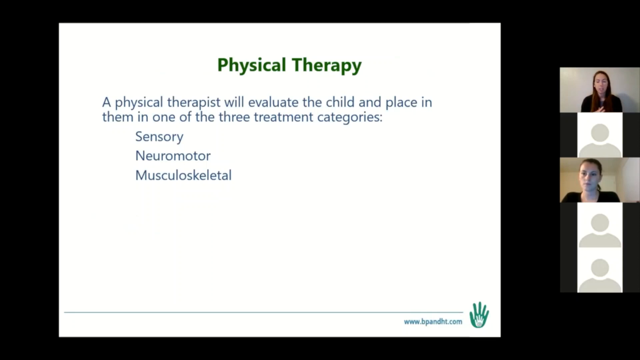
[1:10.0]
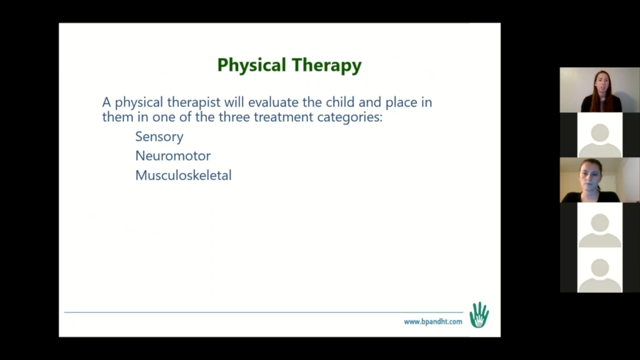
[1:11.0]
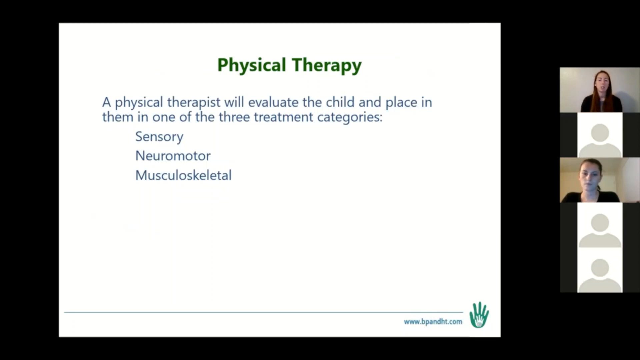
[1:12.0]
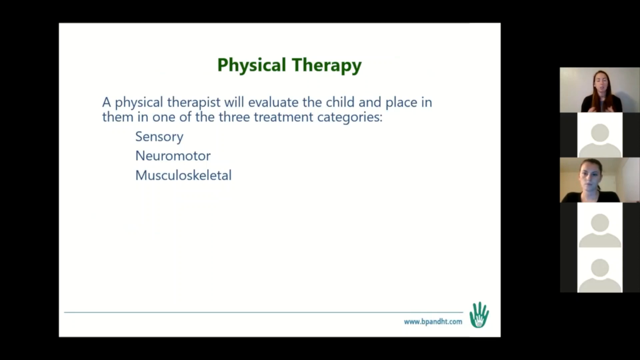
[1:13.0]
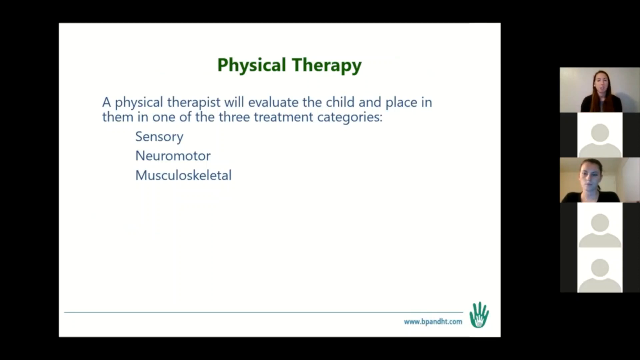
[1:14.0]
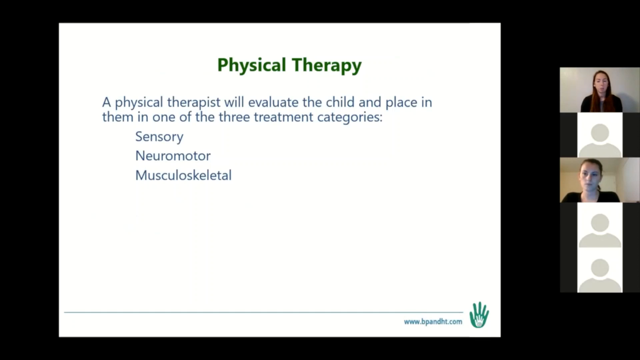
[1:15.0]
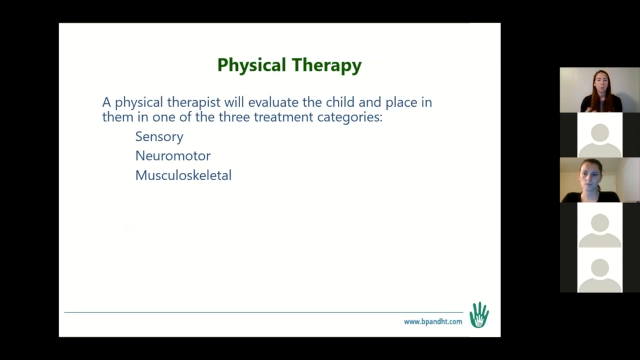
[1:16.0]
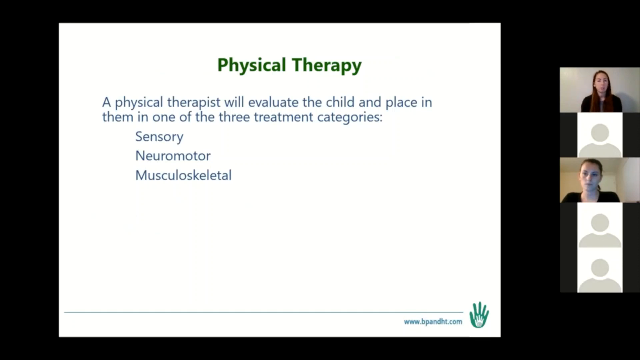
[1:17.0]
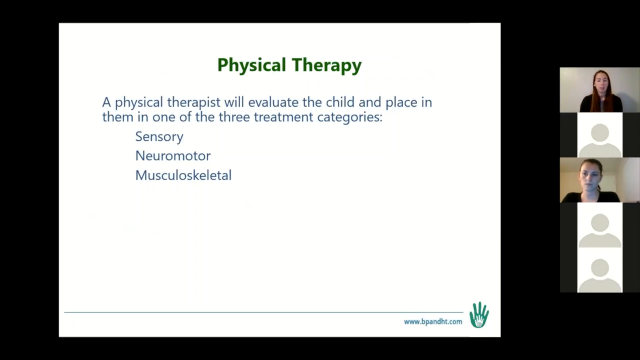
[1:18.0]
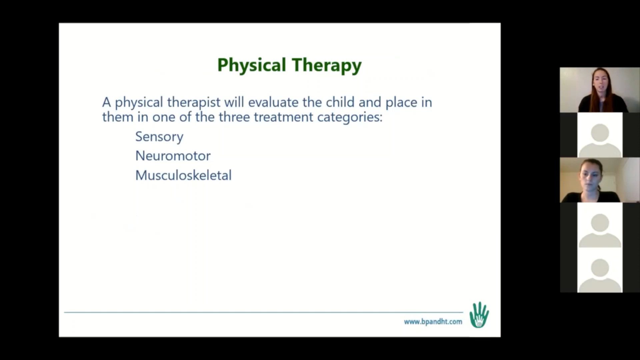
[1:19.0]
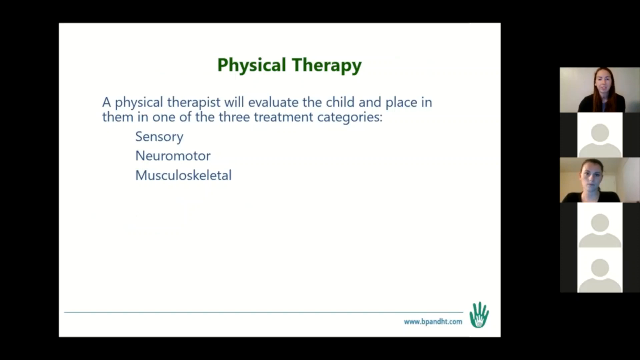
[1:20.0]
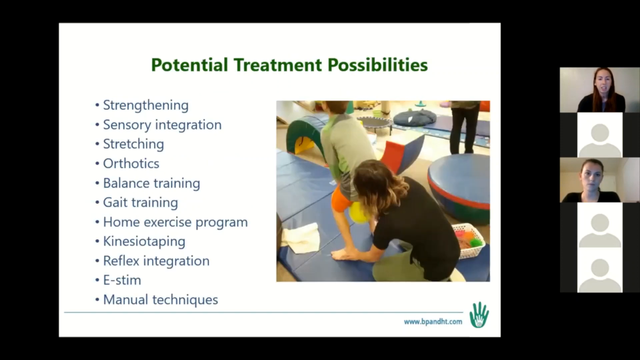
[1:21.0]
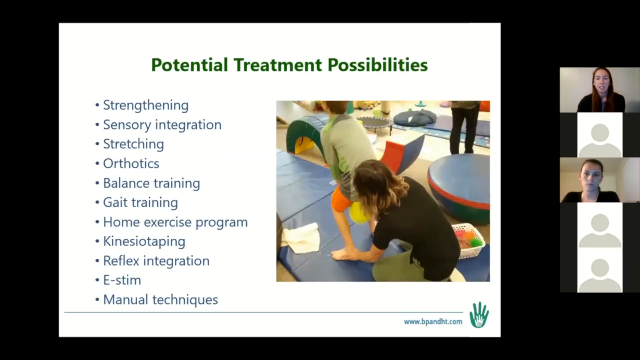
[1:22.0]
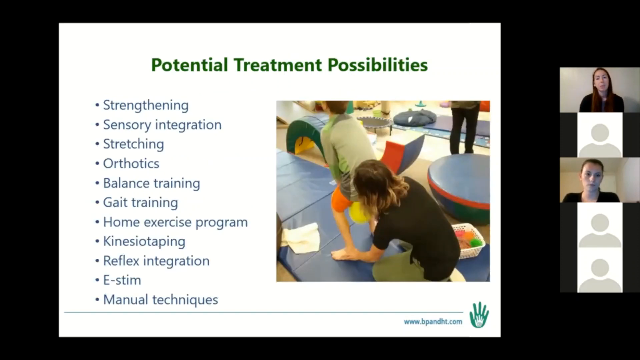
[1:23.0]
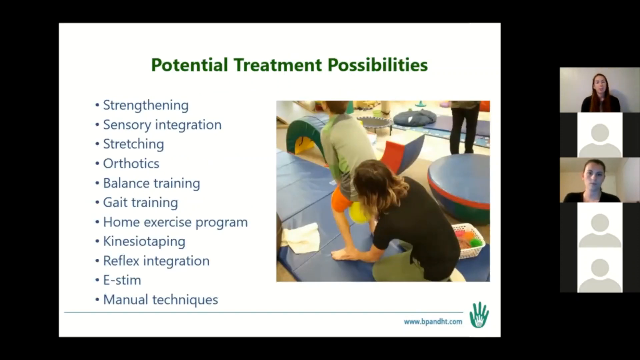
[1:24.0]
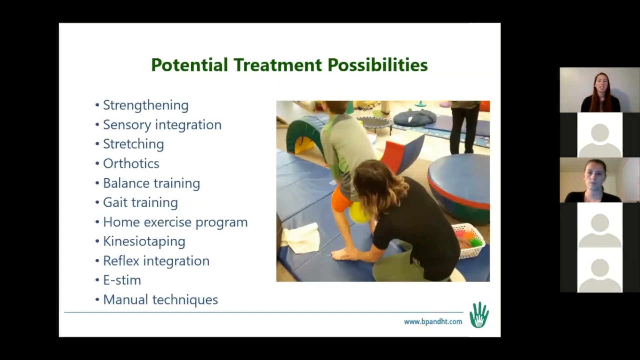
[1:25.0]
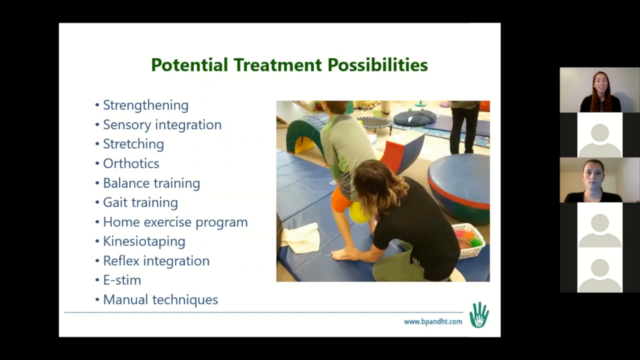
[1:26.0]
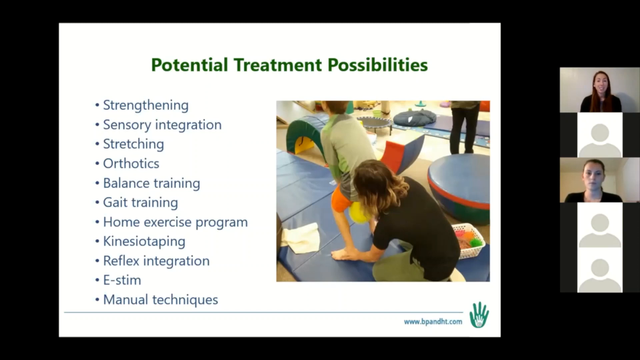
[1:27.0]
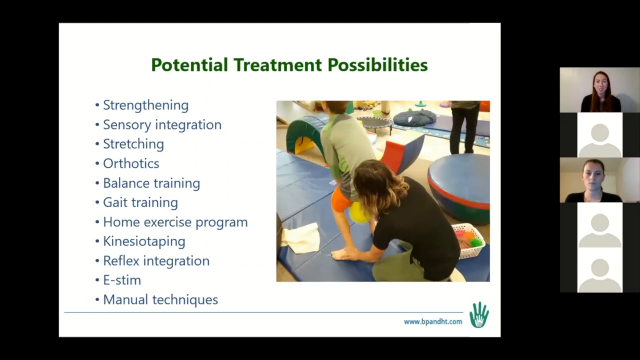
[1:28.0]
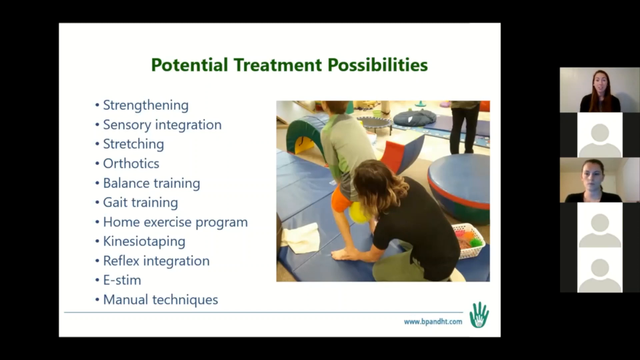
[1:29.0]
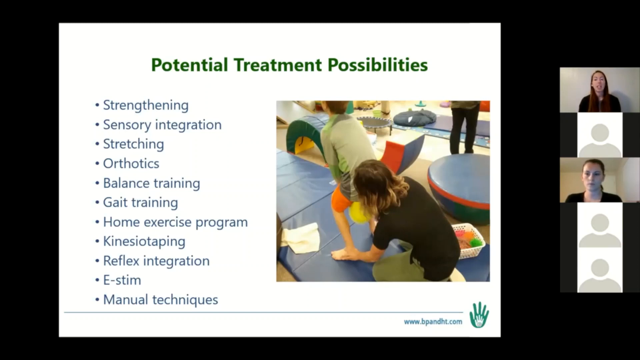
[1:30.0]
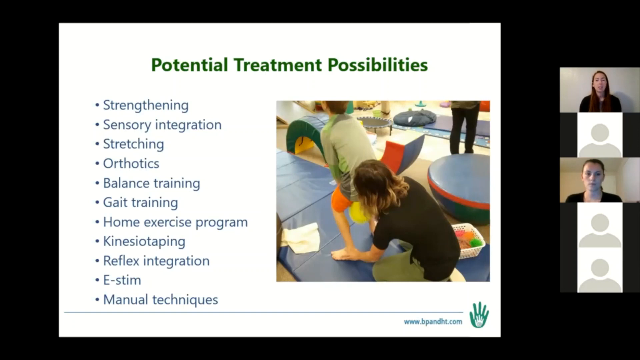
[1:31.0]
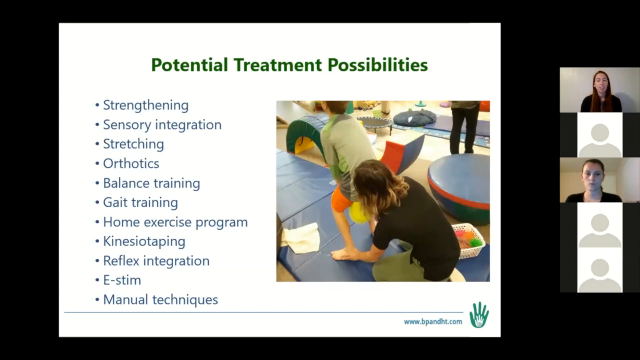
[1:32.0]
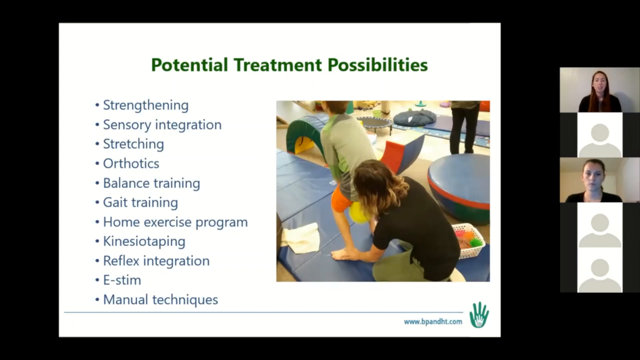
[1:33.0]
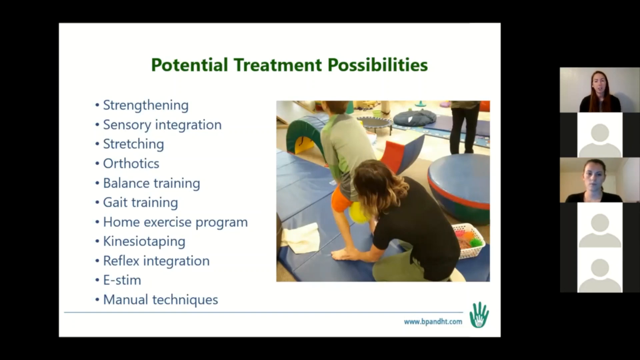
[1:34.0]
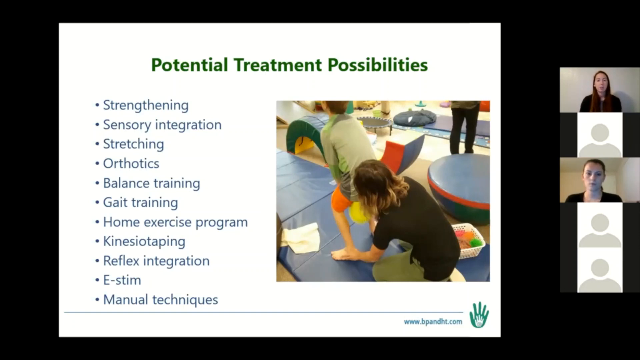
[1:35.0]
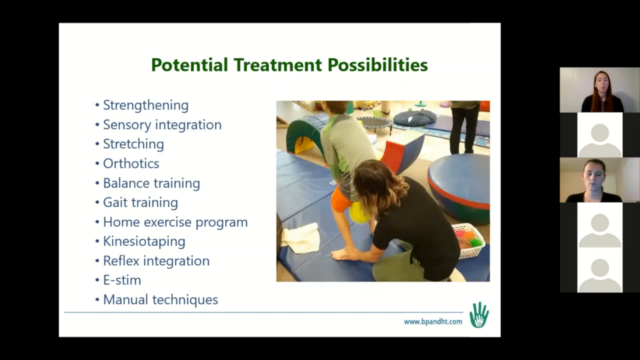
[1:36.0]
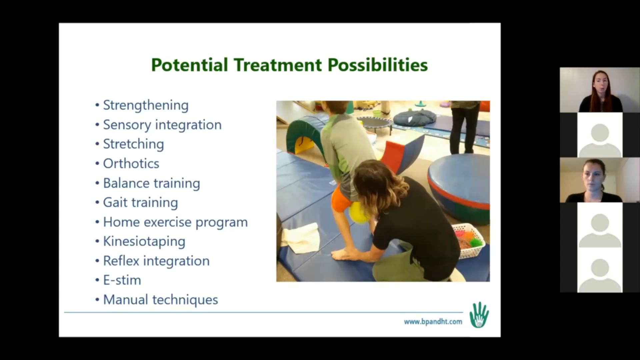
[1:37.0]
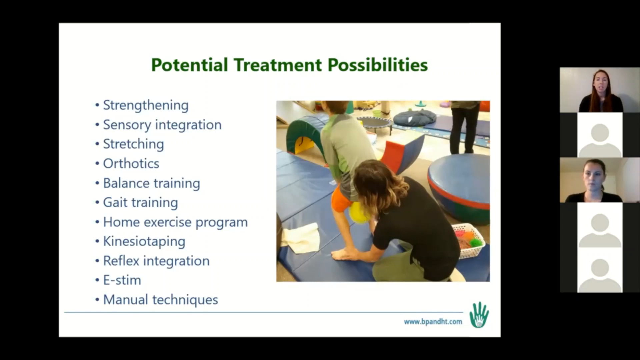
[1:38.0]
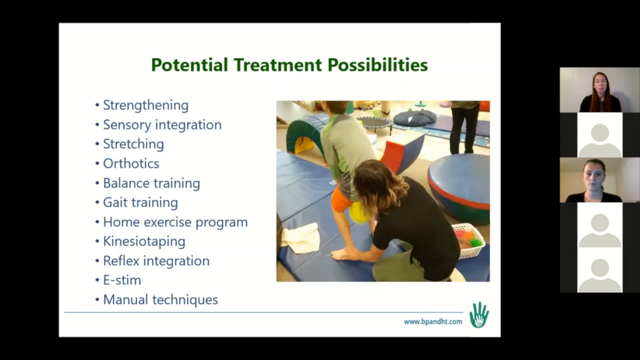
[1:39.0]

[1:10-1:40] A live video conference screen shows icons of five participants arranged vertically on the right side. The first and third participants display their faces live in a video feed, while the second, fourth and fifth participants have only icons displayed, as if their cameras are not on. A white information slide is displayed on the black background of the screen, with "physical therapy" written in green text and below it "a physical therapist would evaluate the child and place them in one of the three treatment categories, sensory, neuromotor, musculoskeletal." The first participant, at the top, talks and gestures with her hands at times; only glimpses of her hands are visible since she is seen from head to chest. The other participant visible on video listens. The slide then changes to a new one with the header "potential treatment possibilities", with about 10 bullet points of treatment options below it. To the right is a colorful image of a child being helped by someone dressed in black, who touches the child's ankles as the child stands with knees slightly bent on top of a blue mat. The bullet points, from top to bottom, read: "strengthening, sensory integration, stretching, orthotics, balance training, gait training, home exercise program, kinesiotaping, reflex integration, E-Stim, manual techniques."